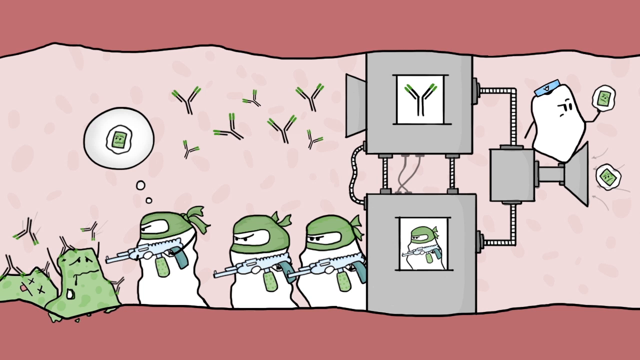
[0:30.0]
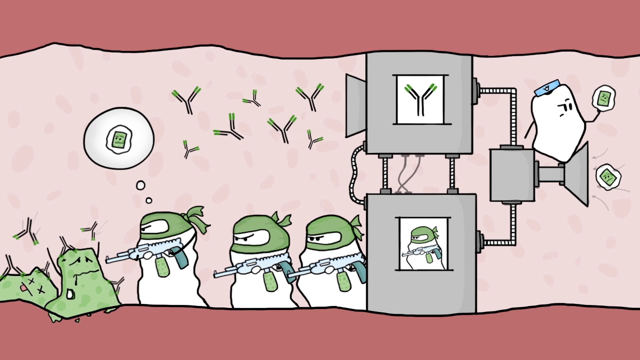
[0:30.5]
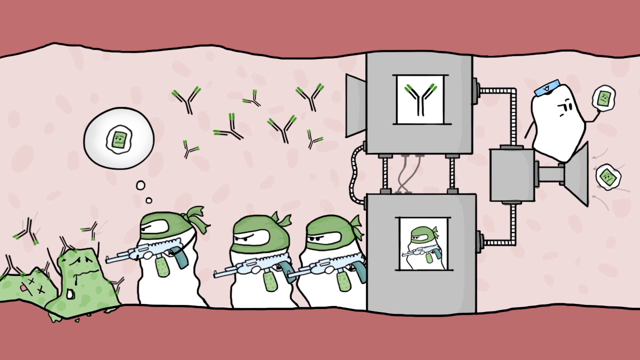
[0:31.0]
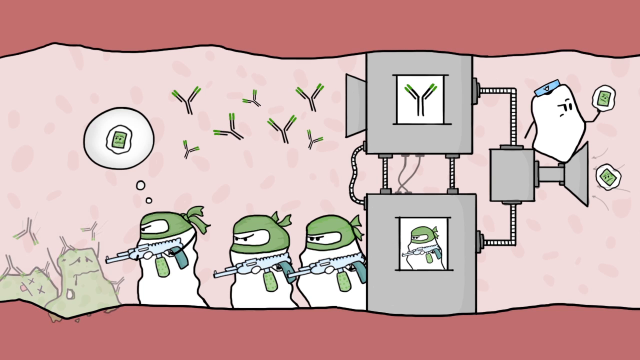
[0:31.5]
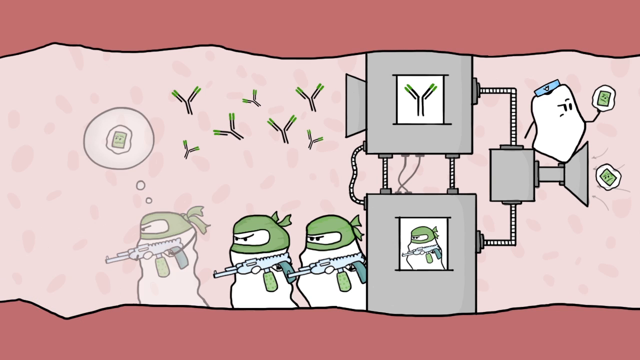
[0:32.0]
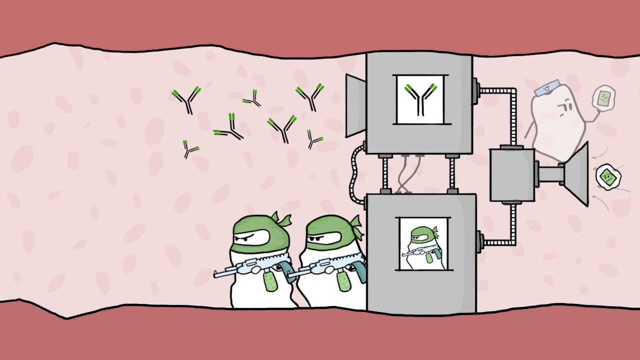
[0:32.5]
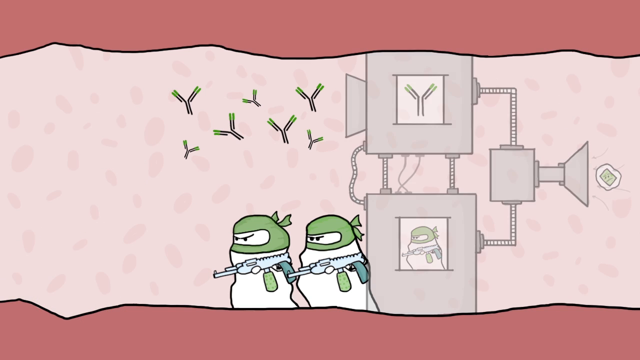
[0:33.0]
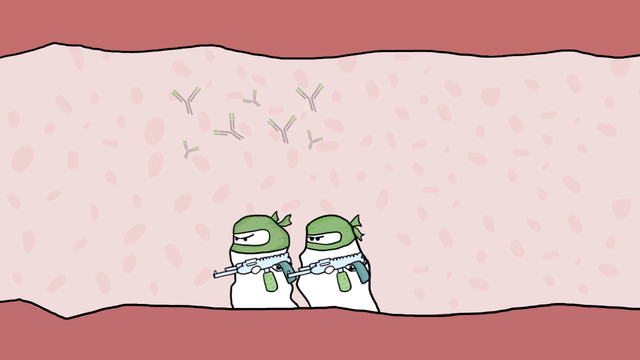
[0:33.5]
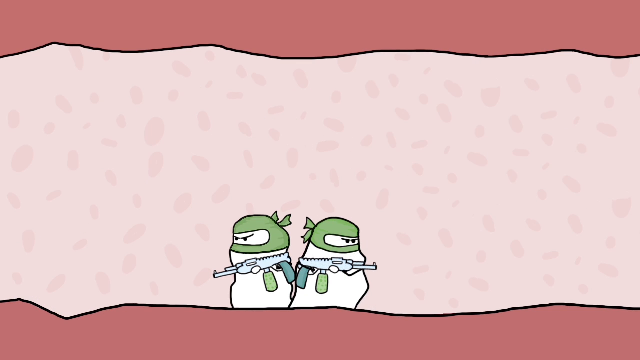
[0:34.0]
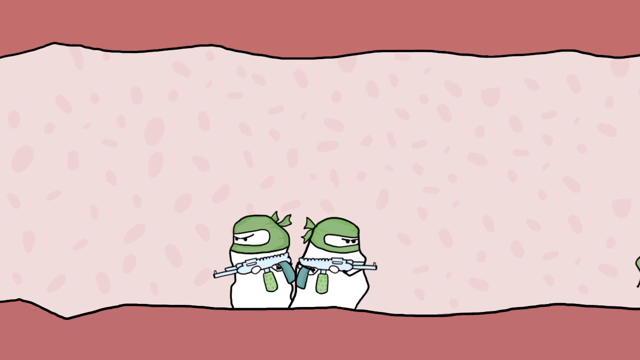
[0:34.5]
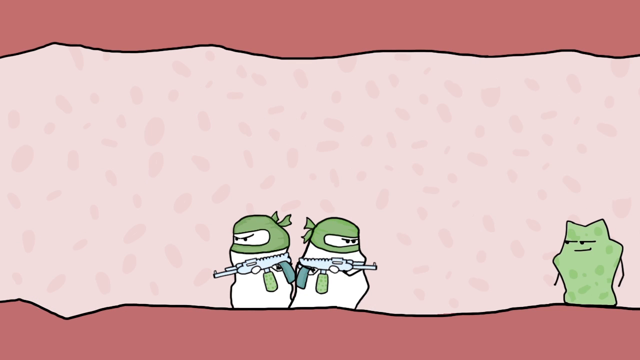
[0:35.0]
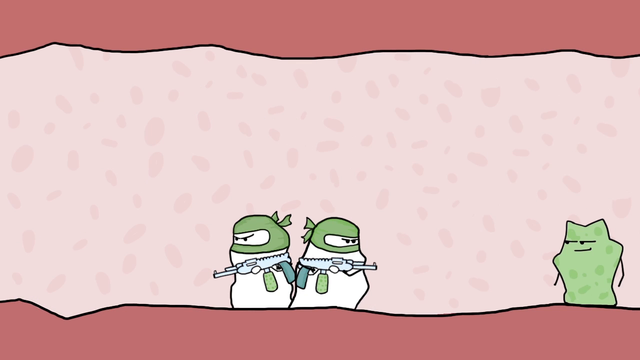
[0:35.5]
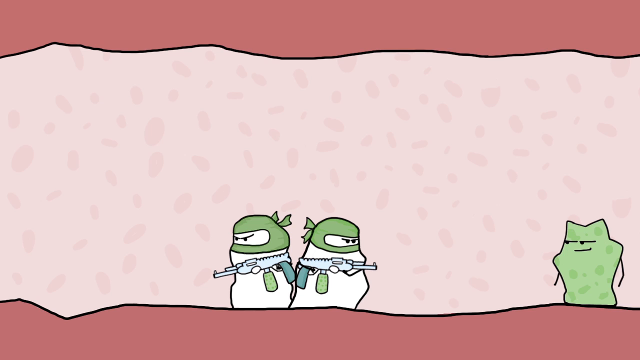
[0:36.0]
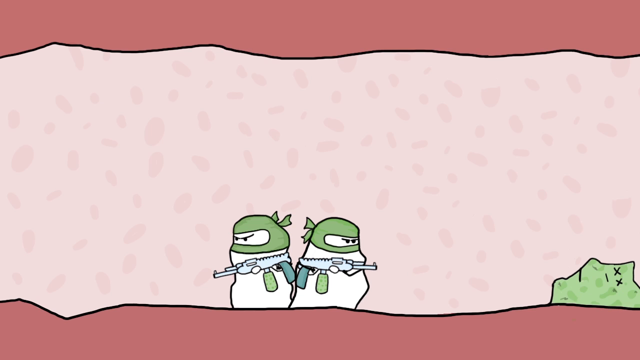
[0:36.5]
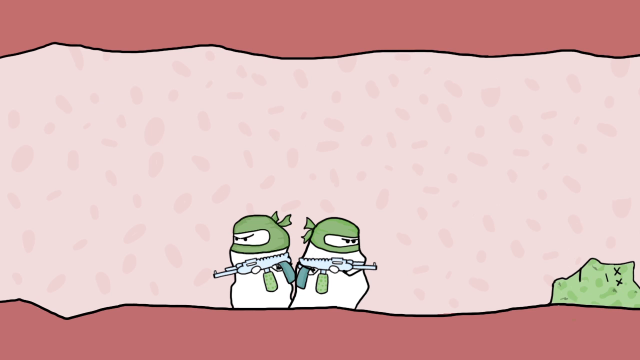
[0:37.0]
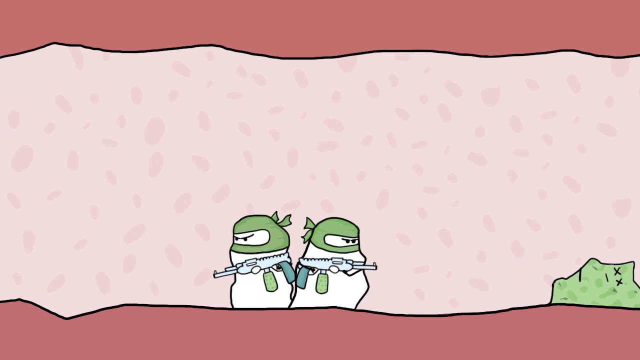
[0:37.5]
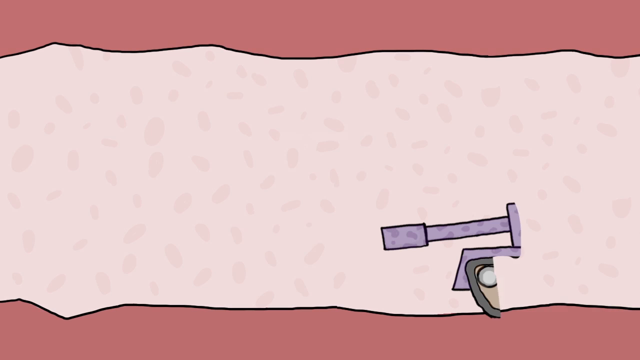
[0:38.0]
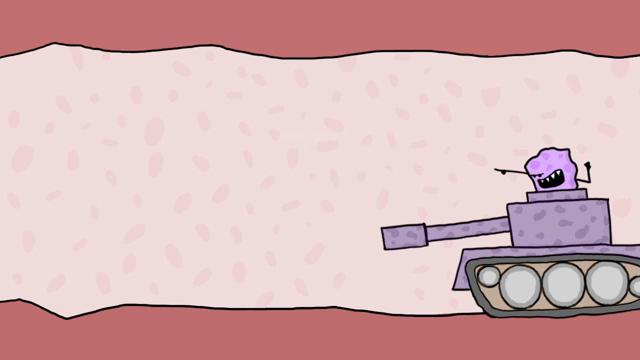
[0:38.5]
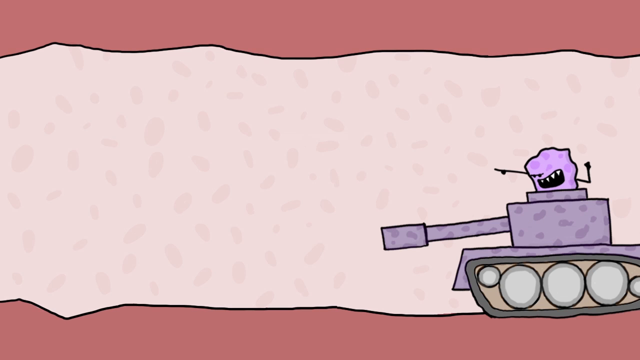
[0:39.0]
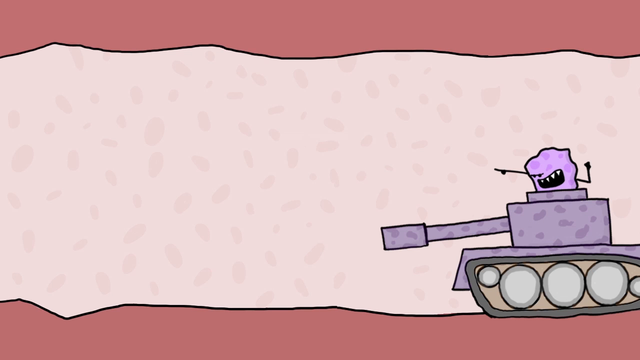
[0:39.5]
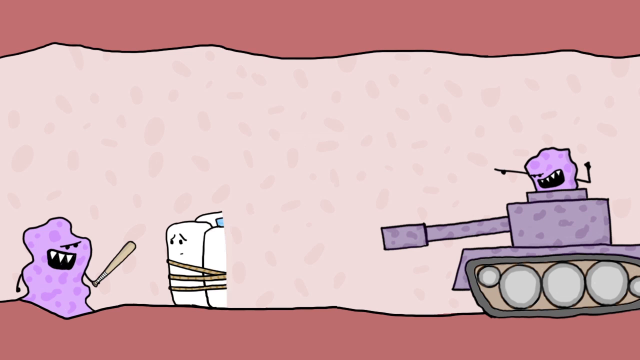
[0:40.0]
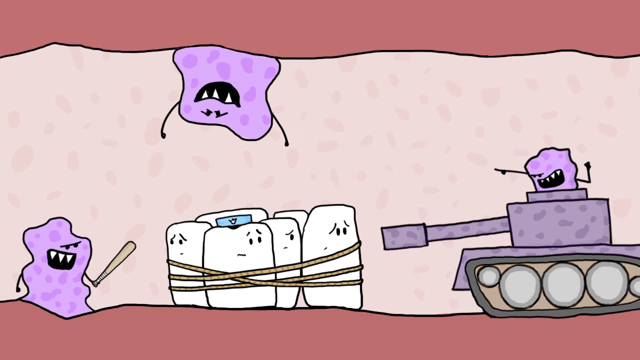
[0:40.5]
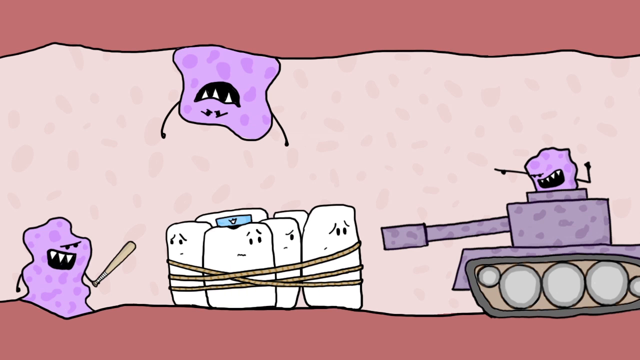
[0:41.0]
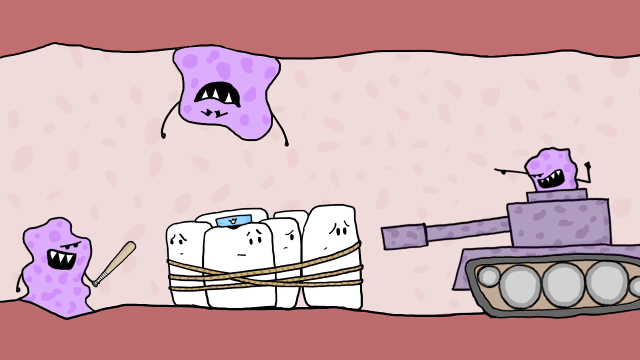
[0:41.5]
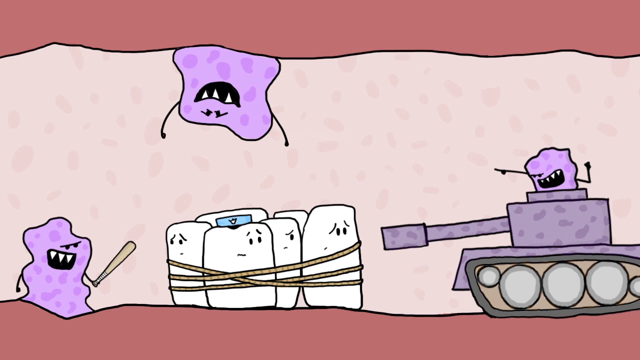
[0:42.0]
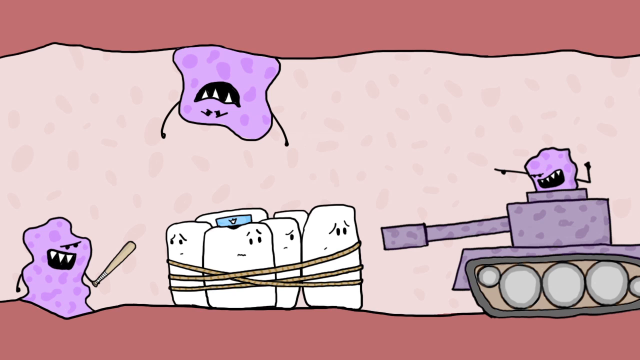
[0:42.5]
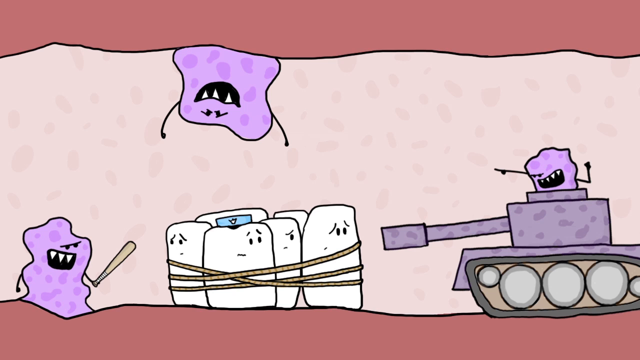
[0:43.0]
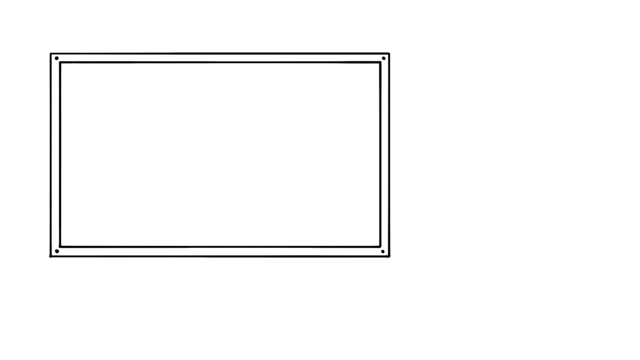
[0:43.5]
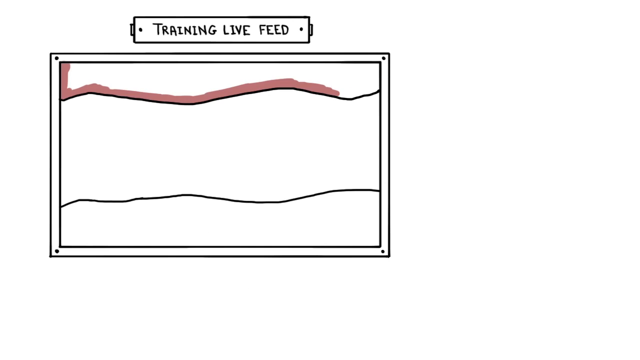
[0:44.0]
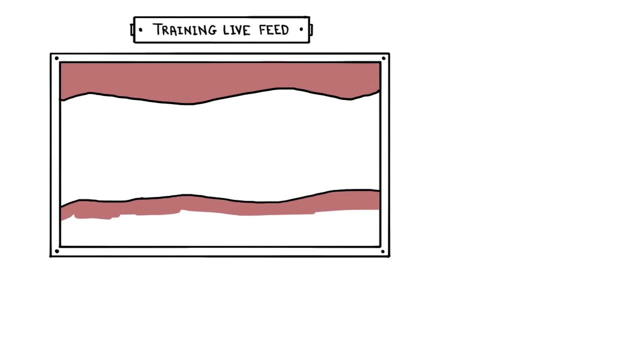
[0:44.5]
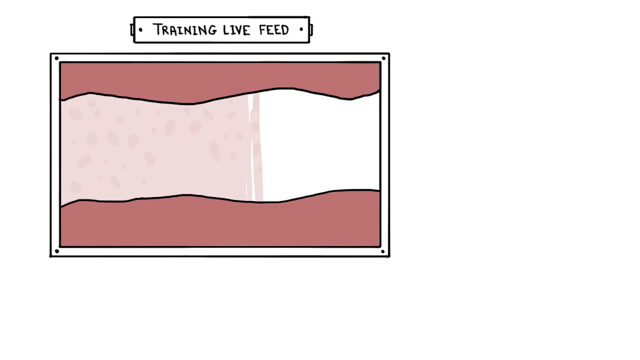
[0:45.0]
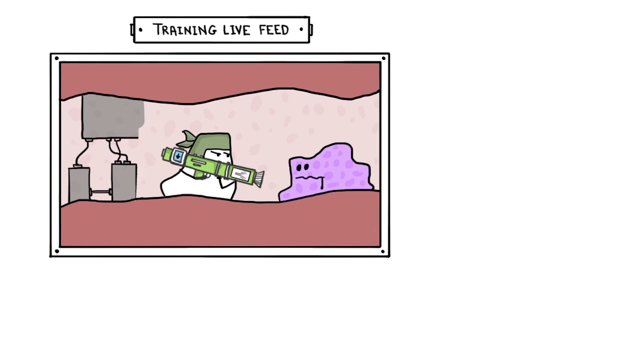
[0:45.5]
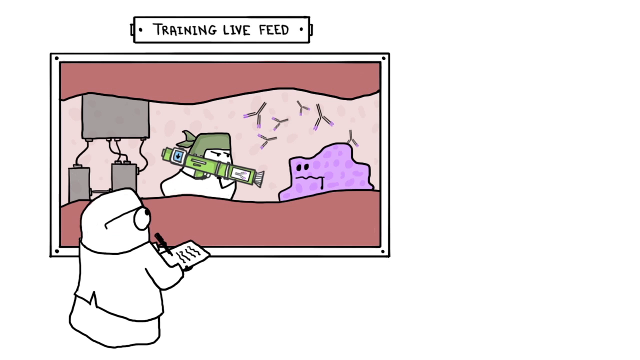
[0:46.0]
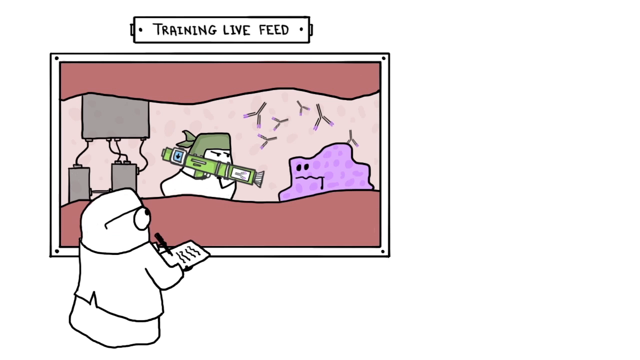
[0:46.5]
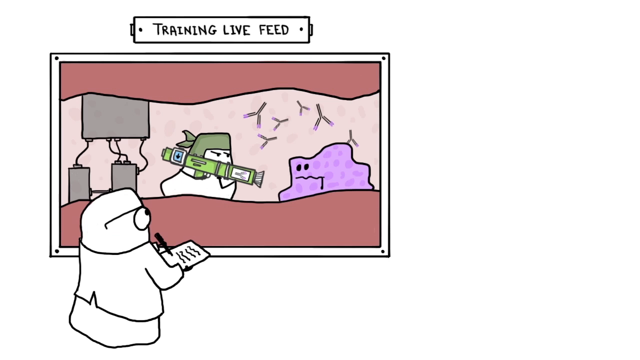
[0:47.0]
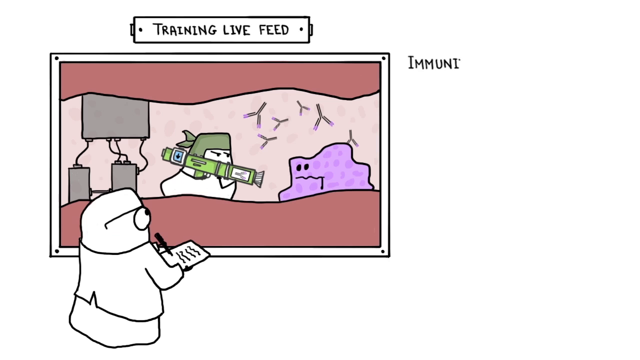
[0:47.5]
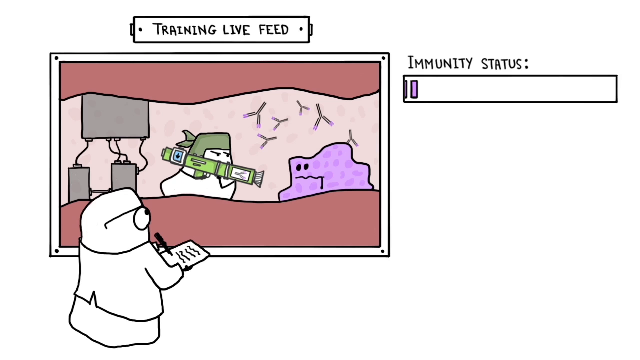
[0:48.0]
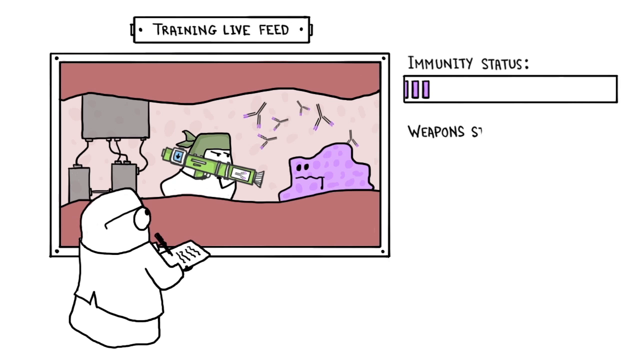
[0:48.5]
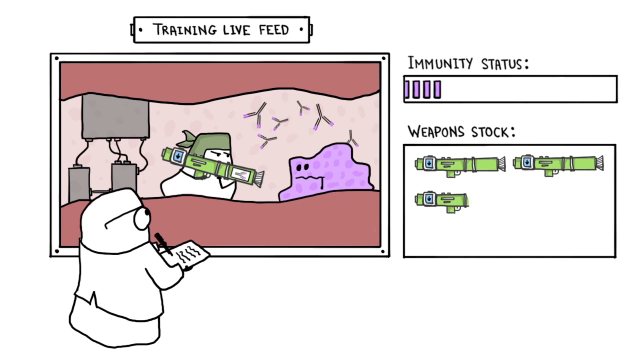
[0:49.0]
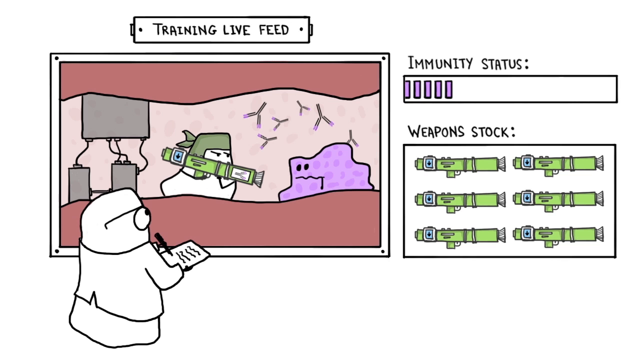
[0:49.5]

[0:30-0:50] Men in green balaclavas hold guns inside a pink surface with red at the top. A green germ-like person appears and one of them shoots him with a gun. A purple tank appears inside the pink tunnel, driven by some sort of purple man. They seem to be holding a few of the white blob men hostage with a rope tied around them, and there is also a purple man with a bat and, at the top, a purple sort of monster, angry looking with sharp fangs. Text reads "training live feed" with a square around it, and a scientist watches the germs fight through a window. One of them holds a bazooka and aims at the other, who is purple. The scientist takes notes on a board while observing. A bar appears labelled "immunity status" and fills up, and underneath it says "weapon stock" with six bazookas.